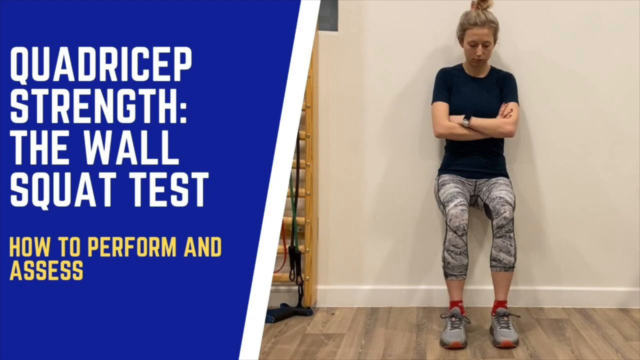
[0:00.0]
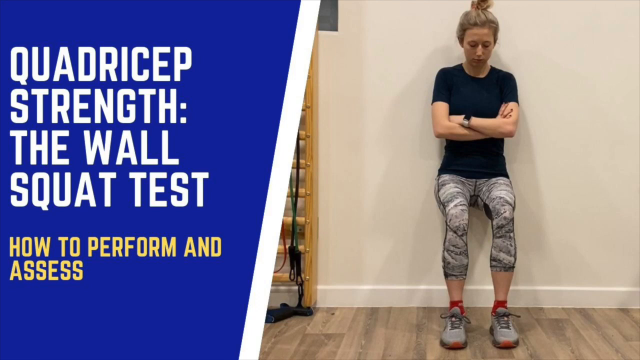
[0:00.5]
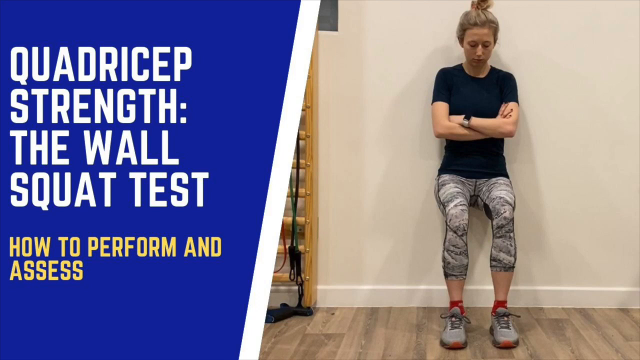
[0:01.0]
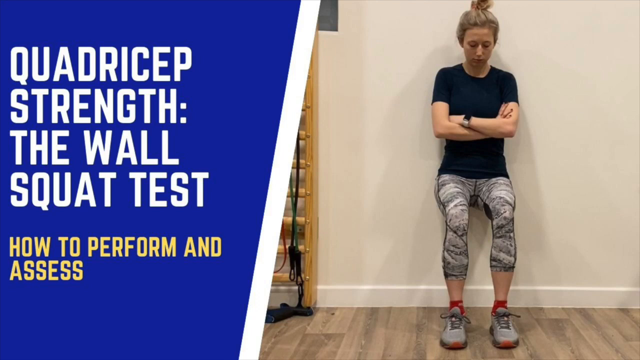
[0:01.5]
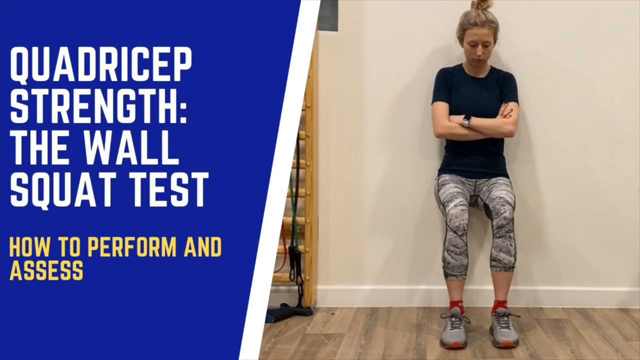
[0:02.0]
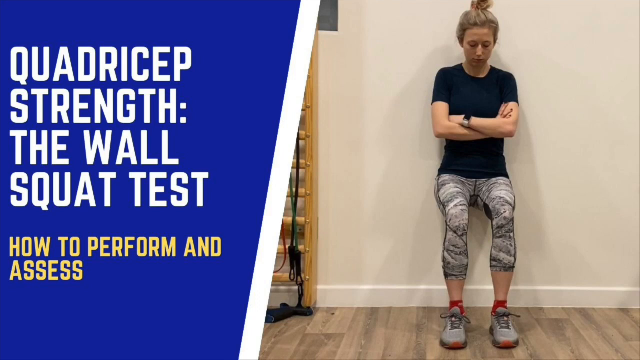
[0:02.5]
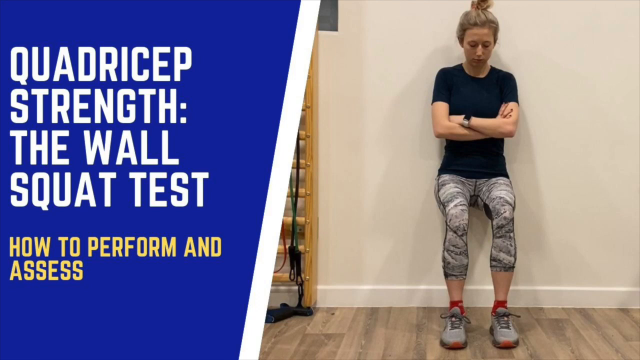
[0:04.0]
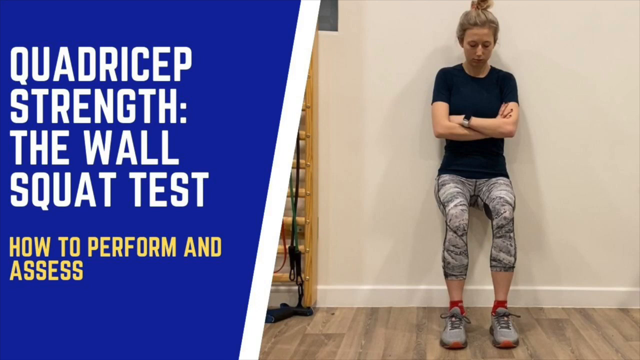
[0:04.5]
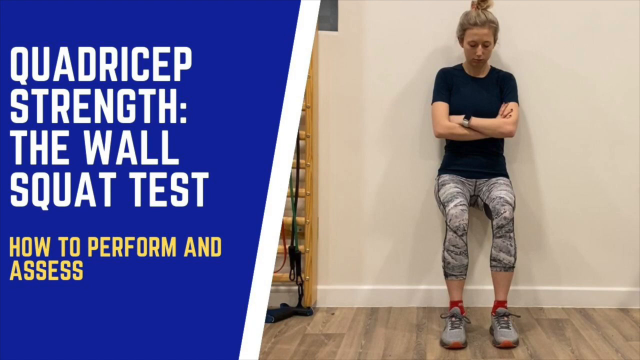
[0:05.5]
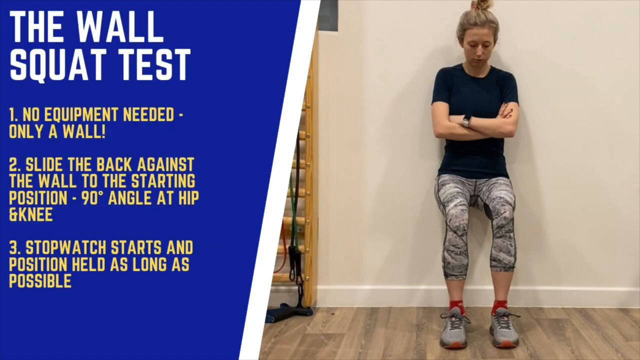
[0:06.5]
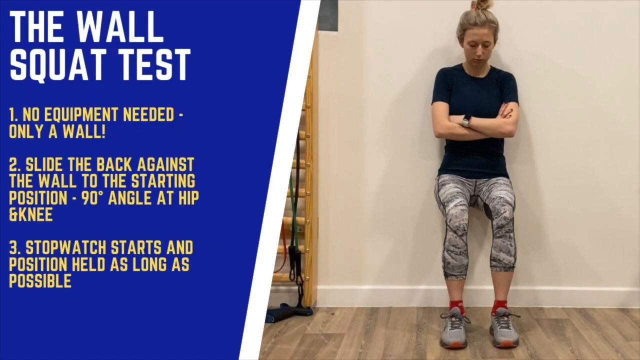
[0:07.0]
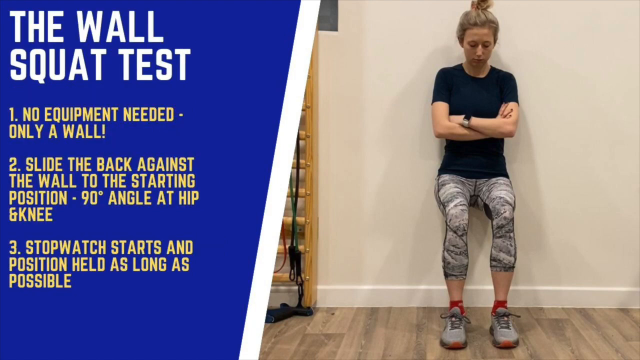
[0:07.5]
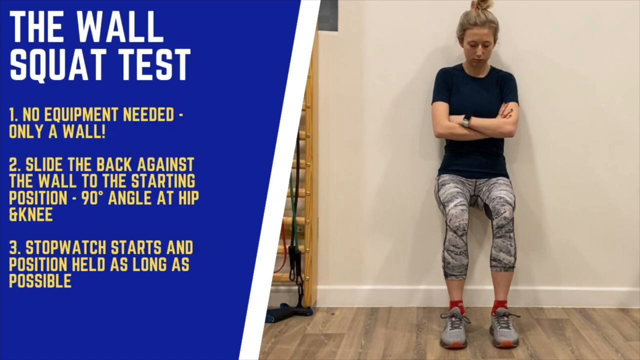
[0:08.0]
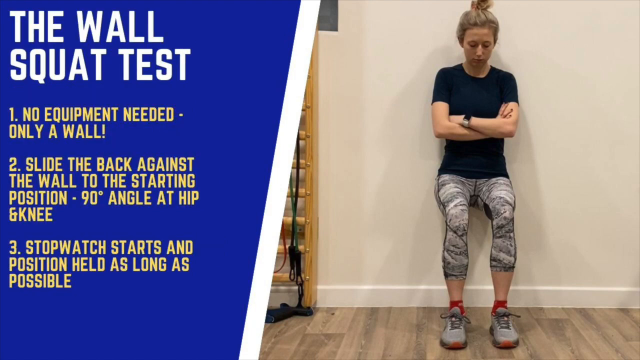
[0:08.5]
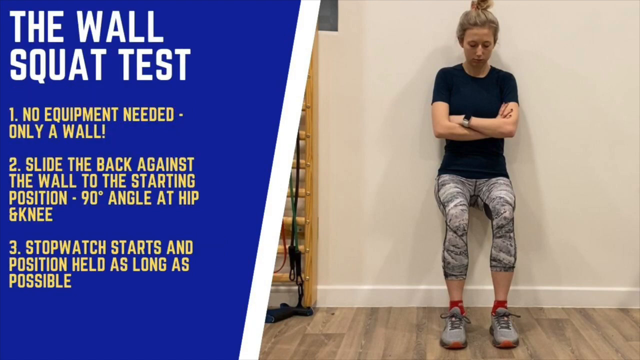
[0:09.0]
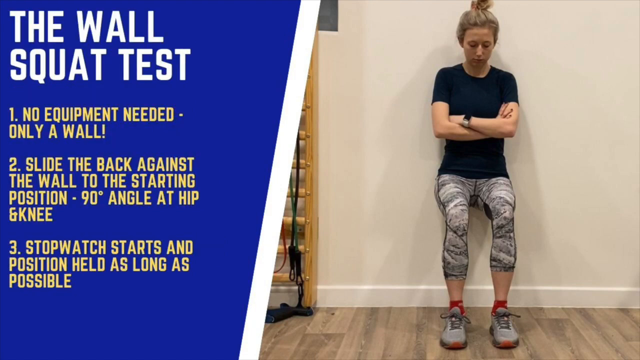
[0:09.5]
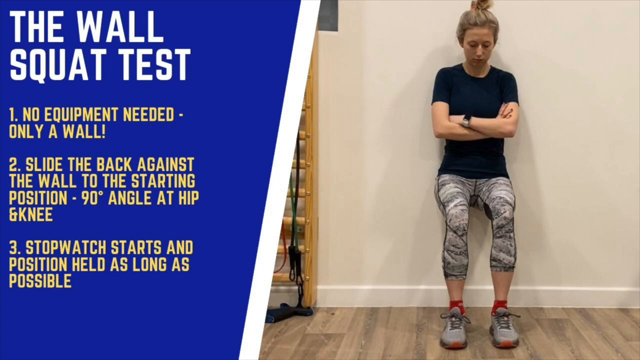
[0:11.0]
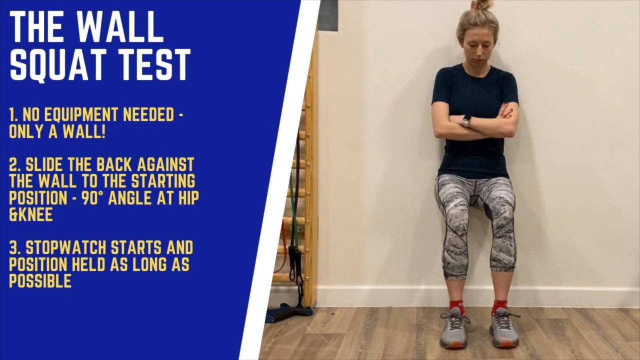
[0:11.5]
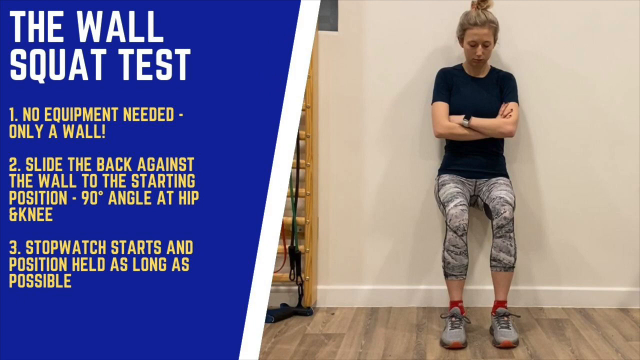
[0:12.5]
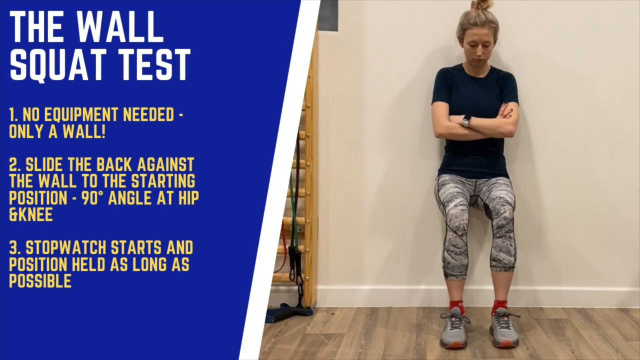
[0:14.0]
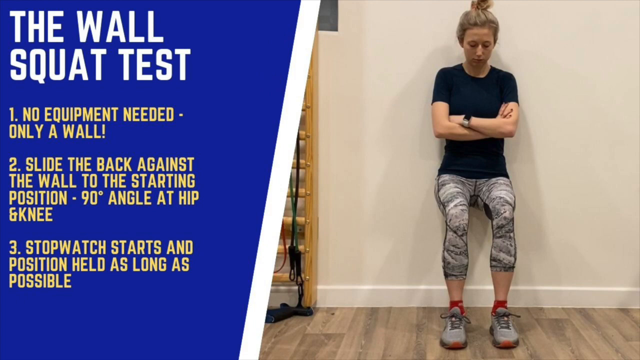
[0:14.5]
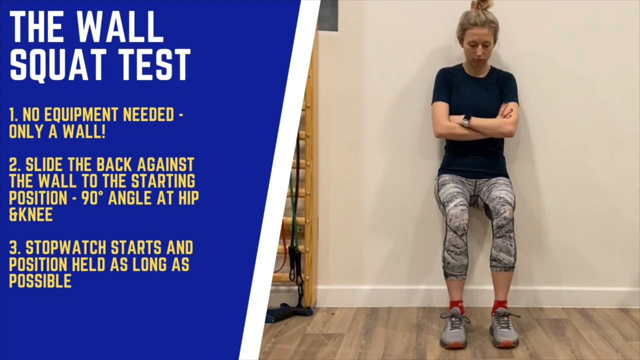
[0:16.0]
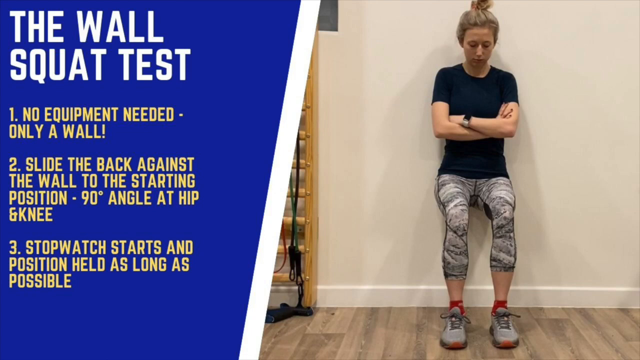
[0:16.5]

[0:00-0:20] A woman appears in what seems to be a fitness instructional video. She wears a solid black athletic t-shirt and roughly three-quarter-length athletic leggings that are grayish, black and white. She is leaning on the wall with her legs bent, in a squat against the wall. On the left side, white text reads "quadriceps strength" and "the wall squat test," and yellow text reads "how to perform." The image of her in the squat is a still picture, not moving, though the rest is video. Next, the text reads "the wall squat test," and in yellow: "1 No equipment needed - only a wall!", "2 Slide the back against the wall to the starting position - 90 degree angle at the hip," and "3 Stopwatch starts and position held as long as possible."